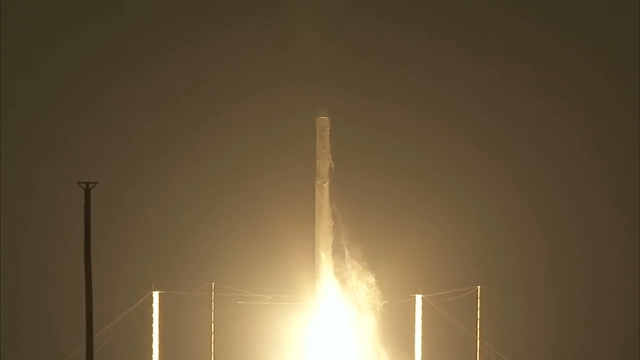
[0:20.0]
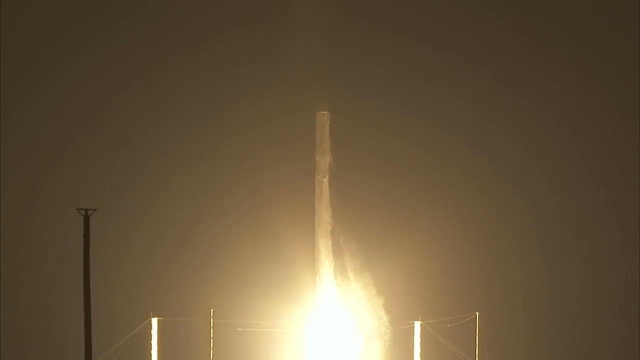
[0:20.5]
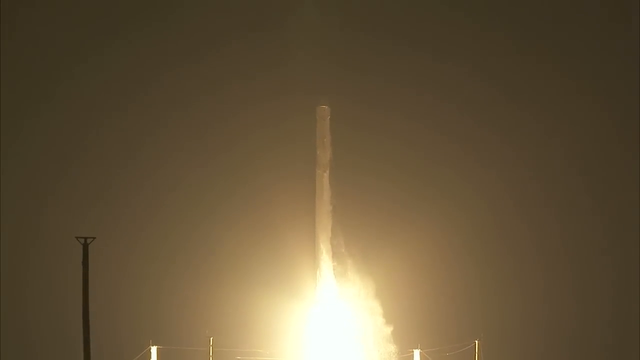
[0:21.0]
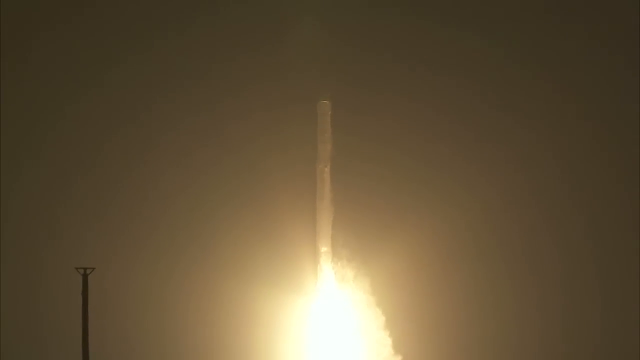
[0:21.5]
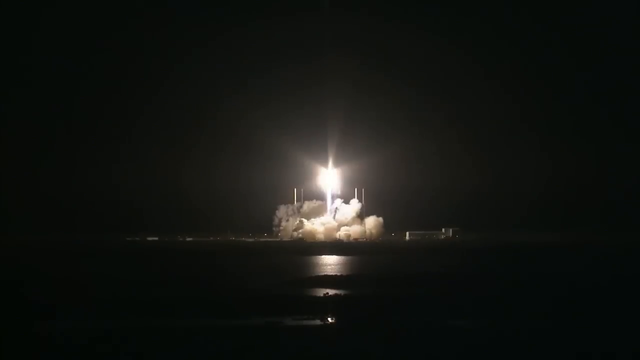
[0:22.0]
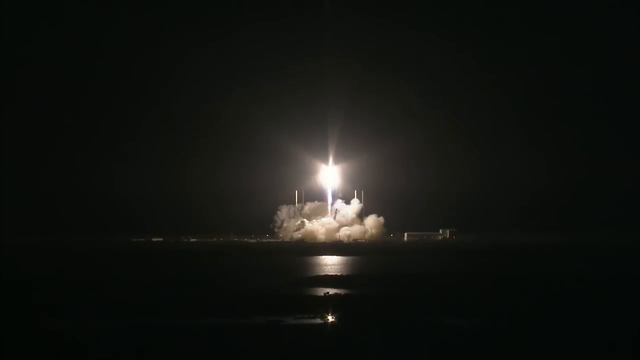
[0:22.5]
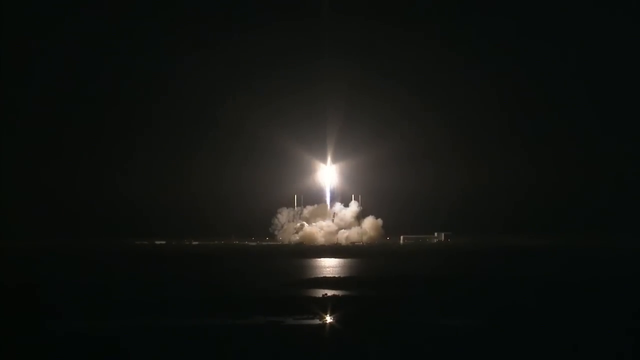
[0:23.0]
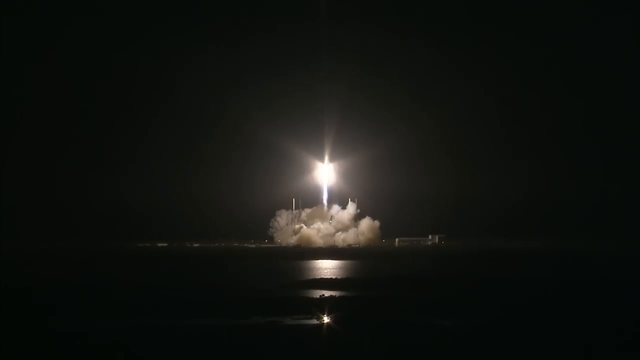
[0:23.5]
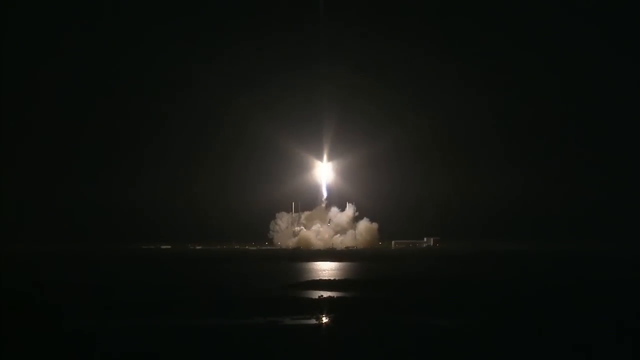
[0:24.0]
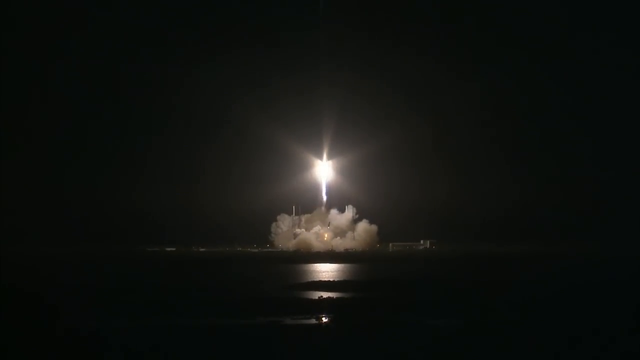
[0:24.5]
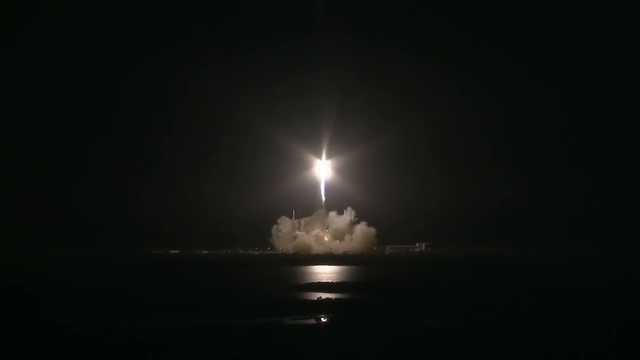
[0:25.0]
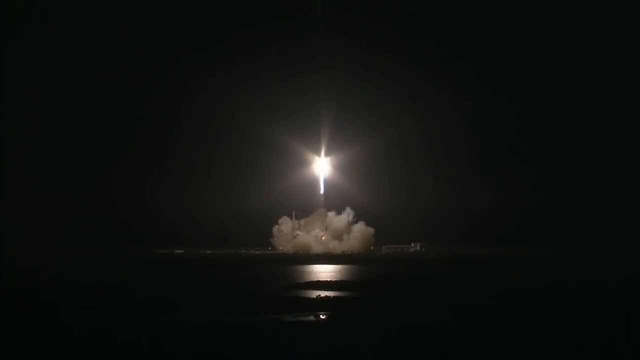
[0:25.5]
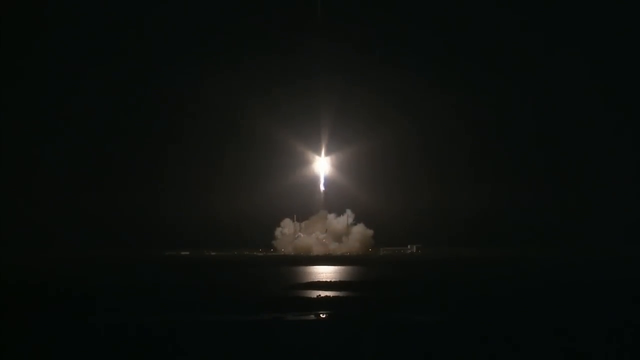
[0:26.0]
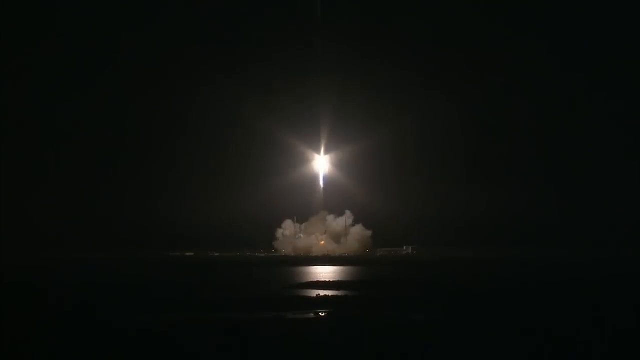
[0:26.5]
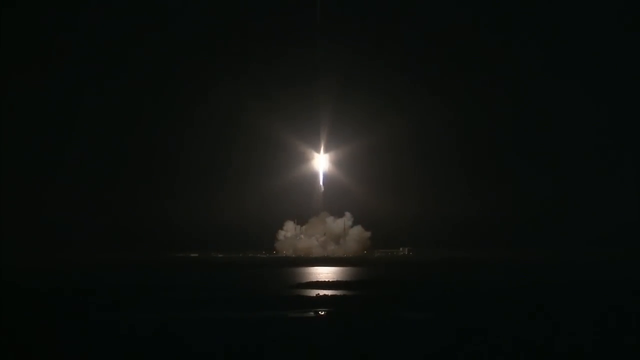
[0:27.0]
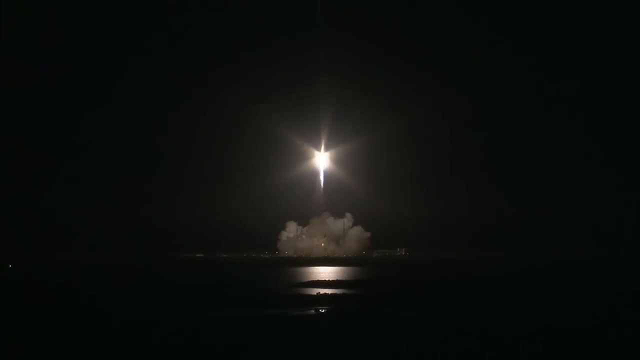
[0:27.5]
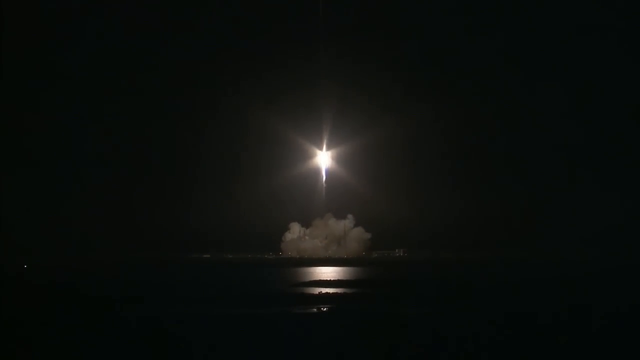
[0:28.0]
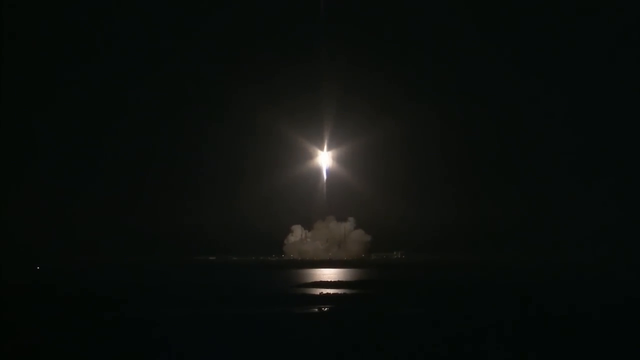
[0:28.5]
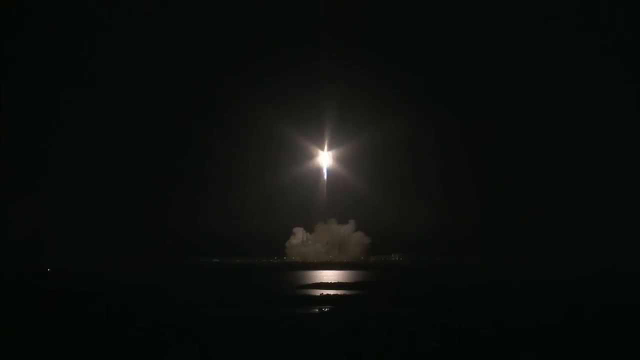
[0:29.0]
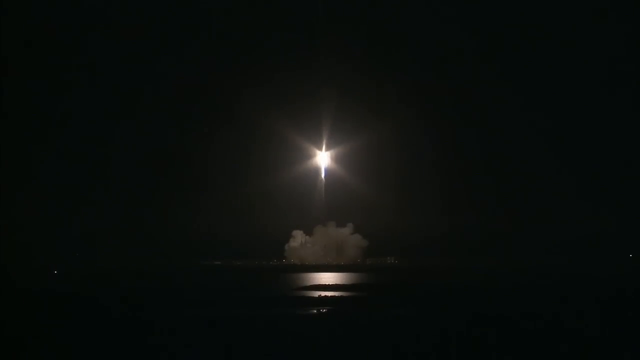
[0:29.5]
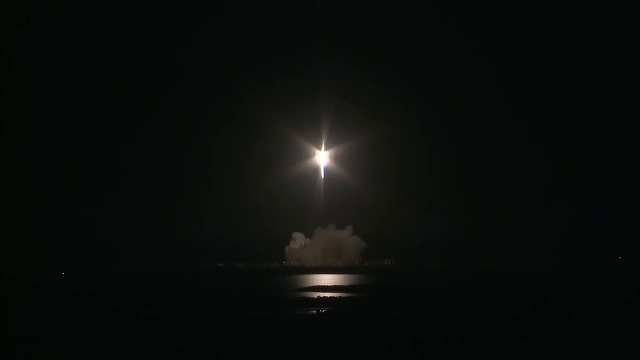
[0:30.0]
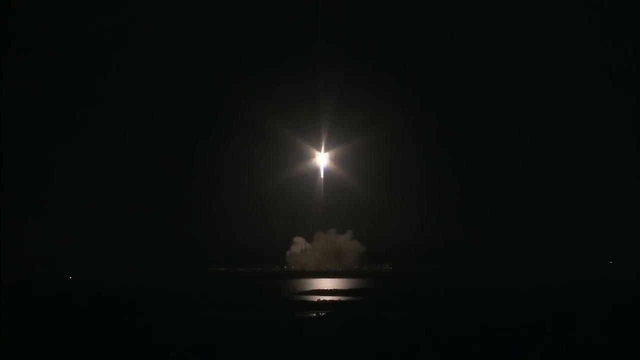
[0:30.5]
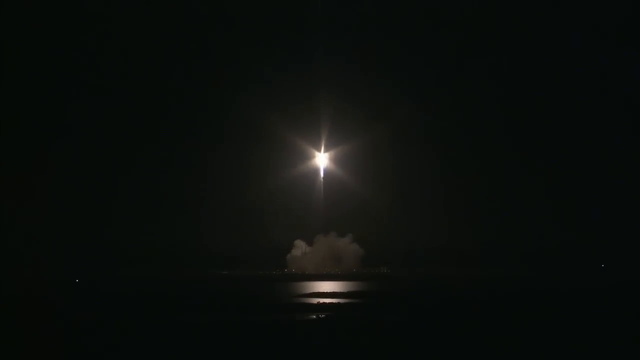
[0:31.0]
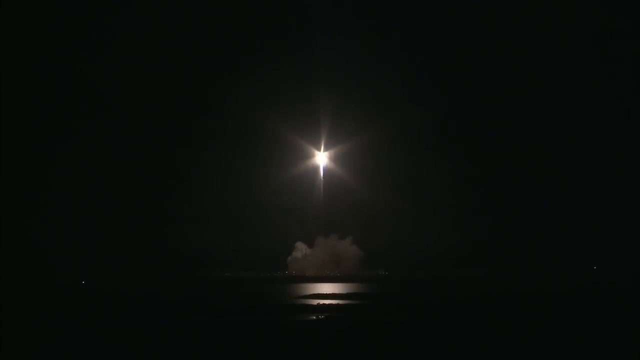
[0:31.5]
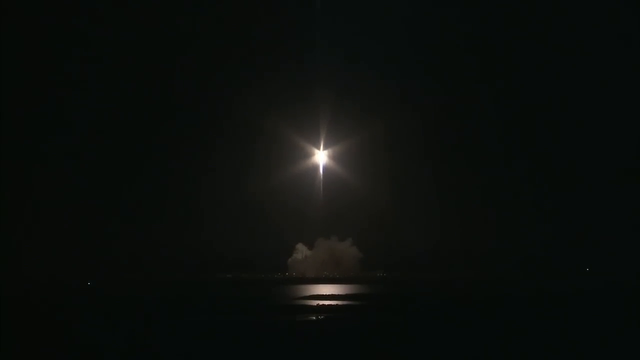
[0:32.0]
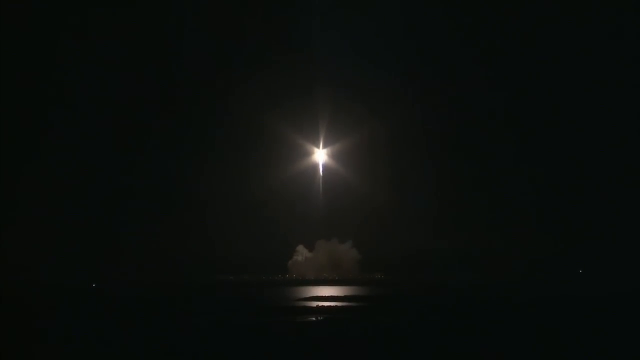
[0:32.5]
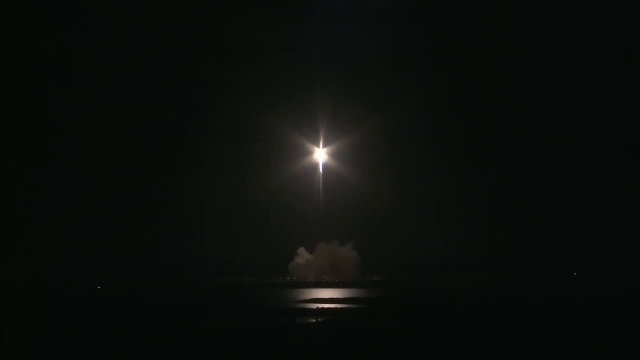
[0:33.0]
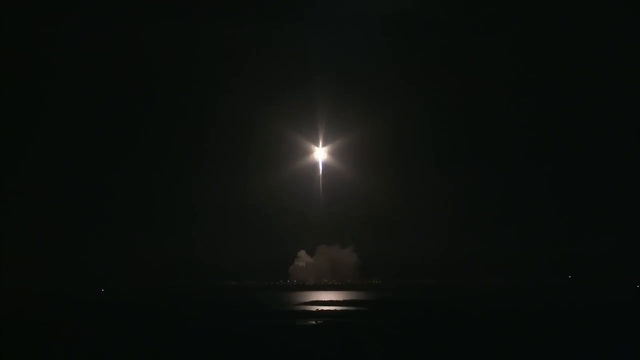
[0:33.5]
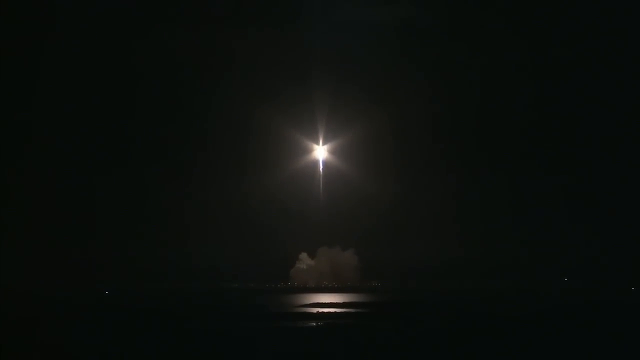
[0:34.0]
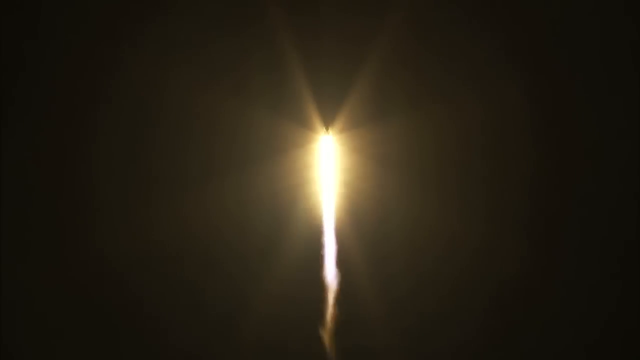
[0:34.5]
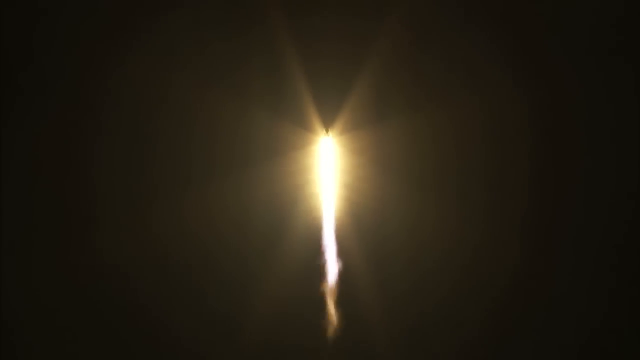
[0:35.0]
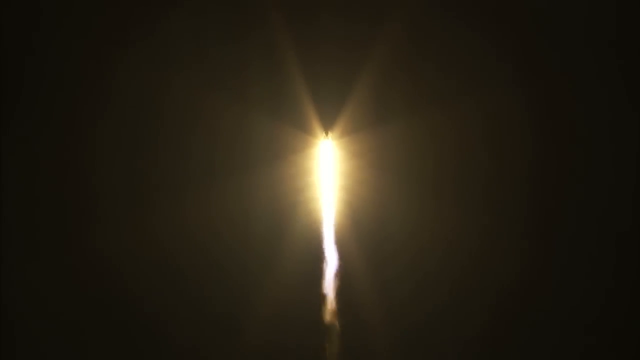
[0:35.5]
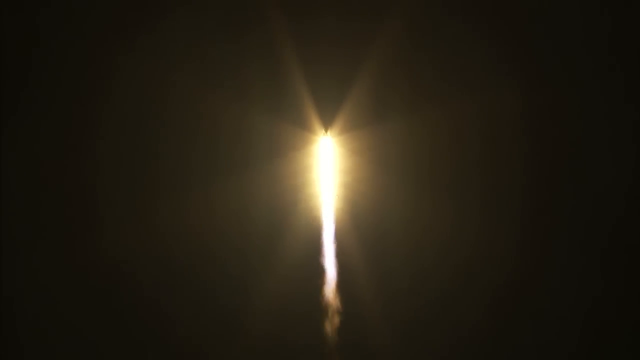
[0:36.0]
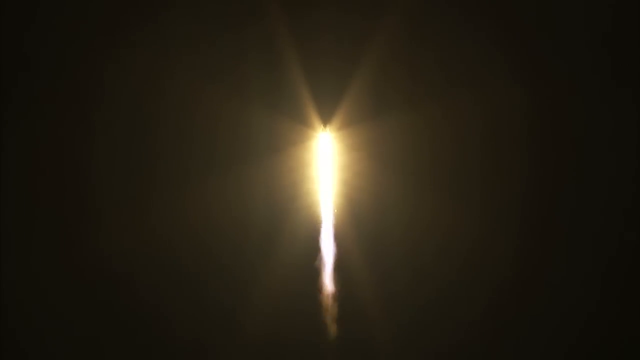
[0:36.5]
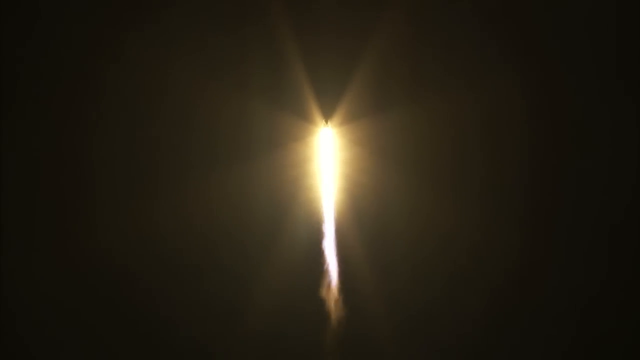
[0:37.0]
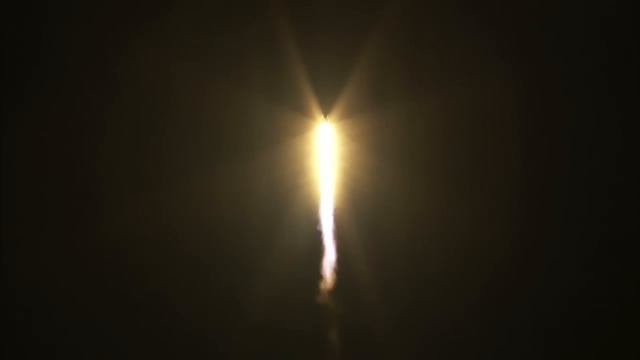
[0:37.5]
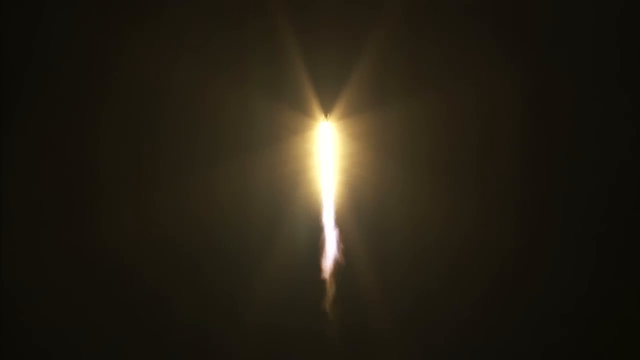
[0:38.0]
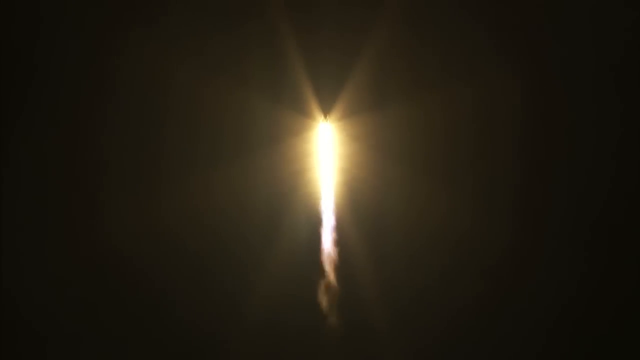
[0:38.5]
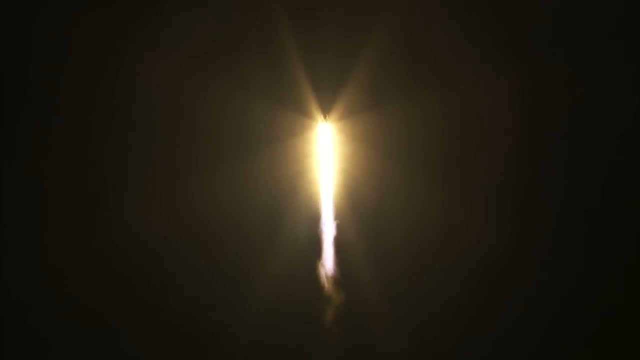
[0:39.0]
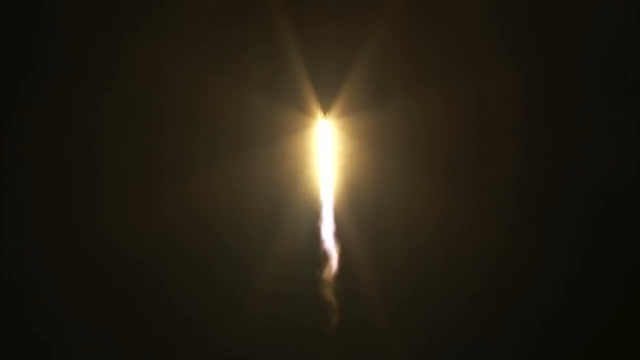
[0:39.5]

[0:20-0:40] The rocket grows slowly higher and higher in a closer shot, and then the view widens outward, showing it rise from further away. A big, huge cloud of smoke comes up around it close to the ground. The rocket goes higher and higher and becomes a bright light that almost looks like a star in the distance, with points of light shining off in five different triangular directions. Eventually it is so far away that only the light is visible, moving very quickly up into the sky, surrounded by the dark night sky. The big cloud of smoke slowly fades, taking a long time to dissipate. The very bright, almost inflamed-looking rocket moves very quickly, straight up into the sky.